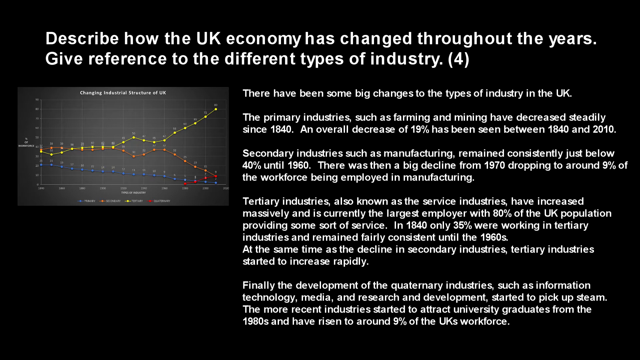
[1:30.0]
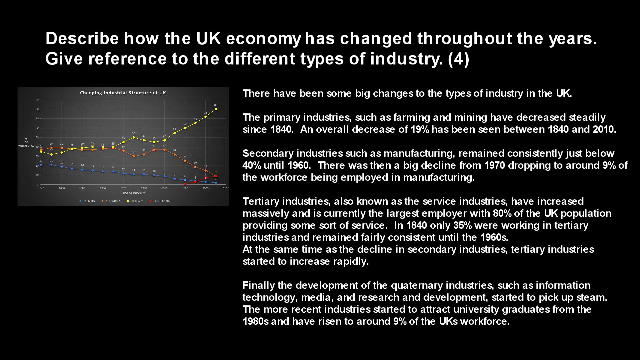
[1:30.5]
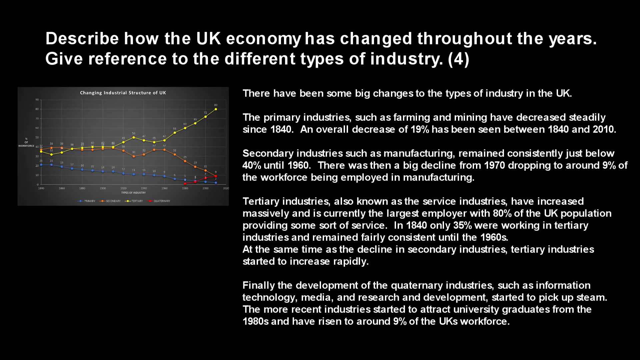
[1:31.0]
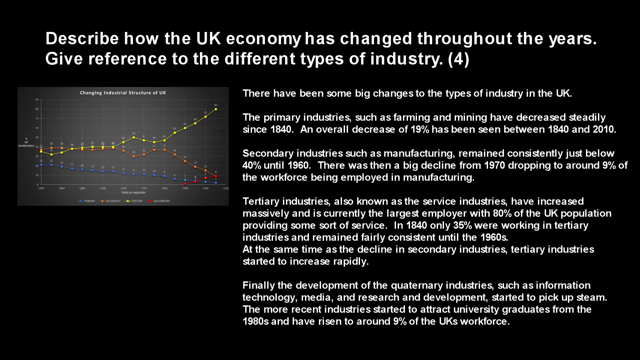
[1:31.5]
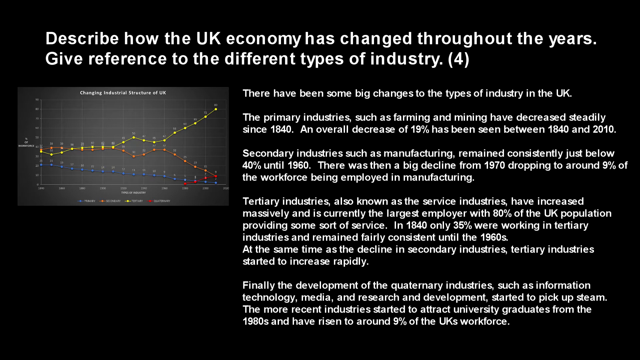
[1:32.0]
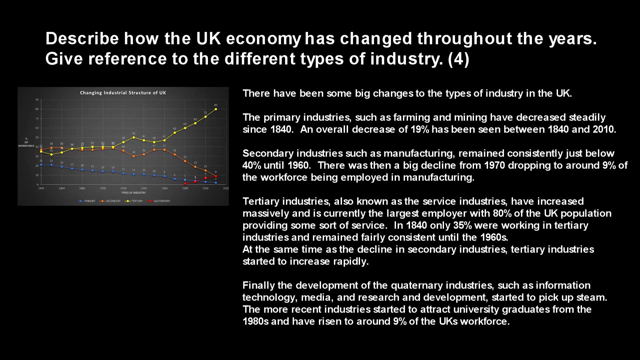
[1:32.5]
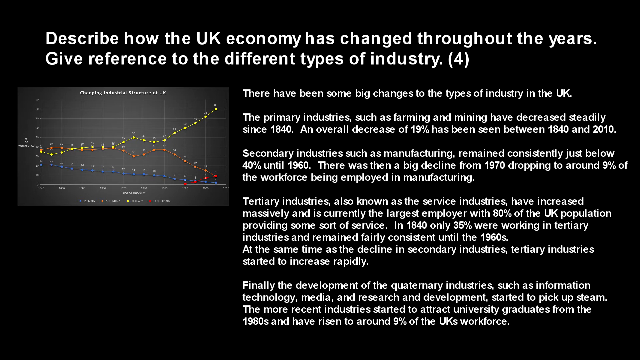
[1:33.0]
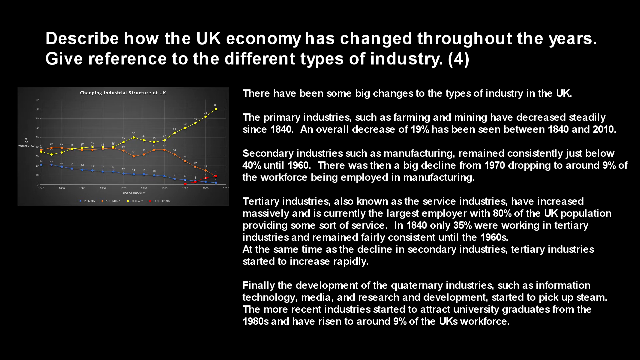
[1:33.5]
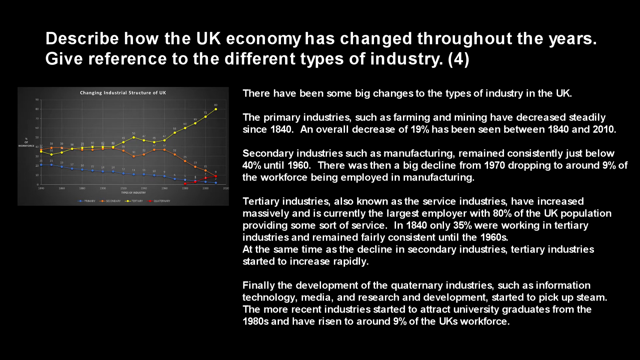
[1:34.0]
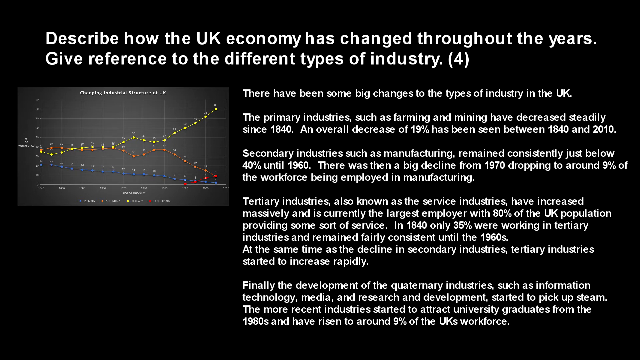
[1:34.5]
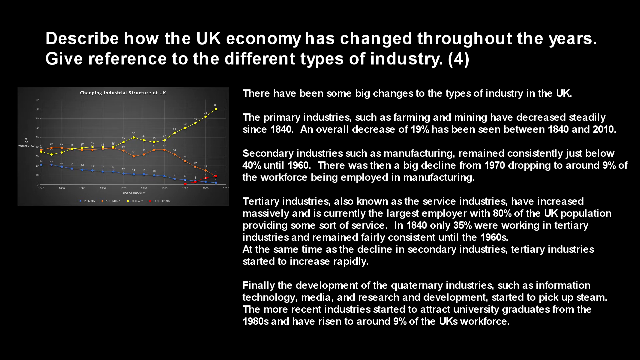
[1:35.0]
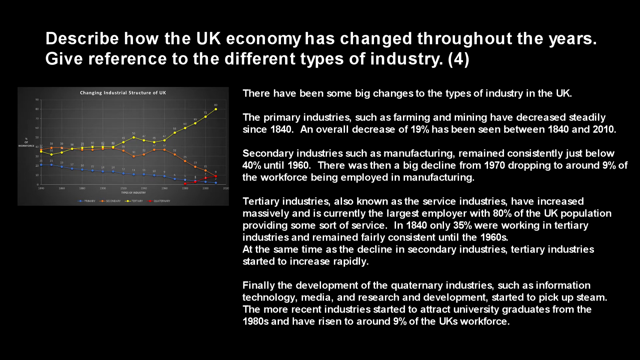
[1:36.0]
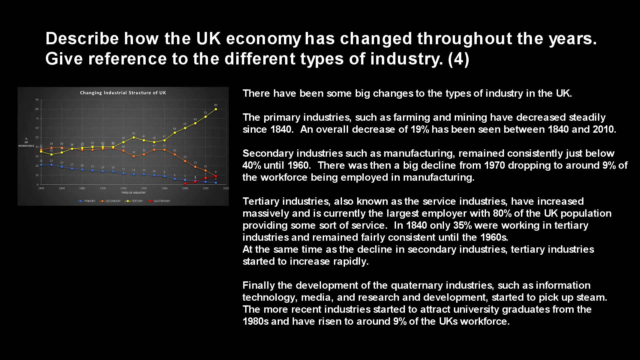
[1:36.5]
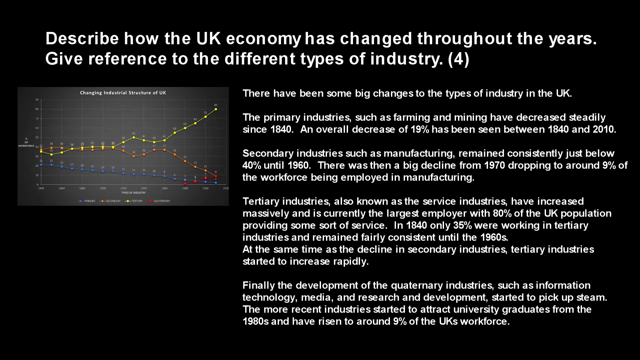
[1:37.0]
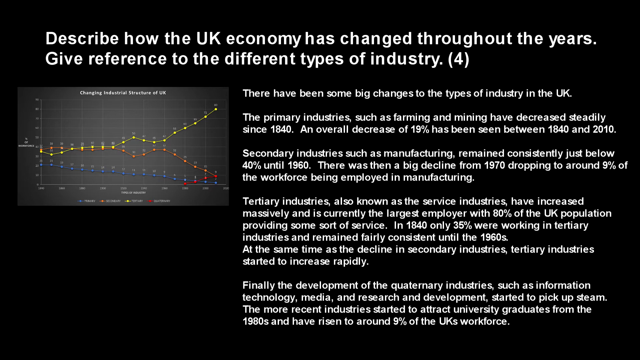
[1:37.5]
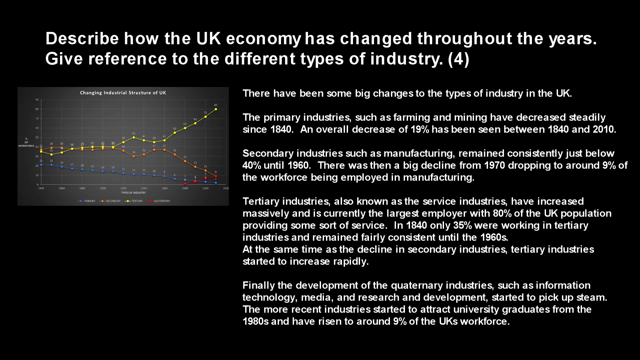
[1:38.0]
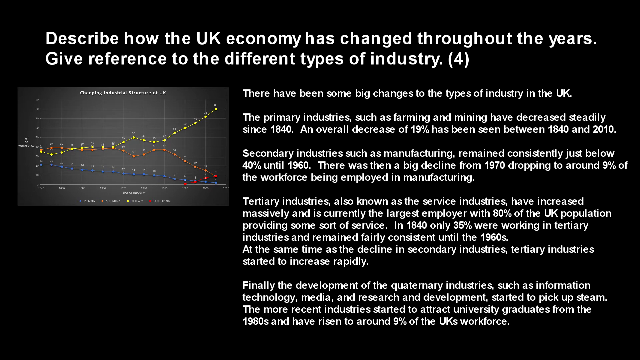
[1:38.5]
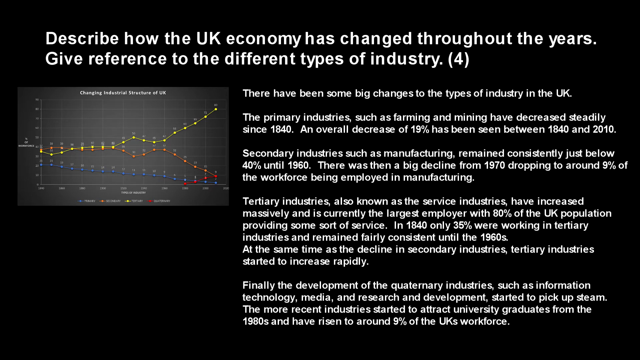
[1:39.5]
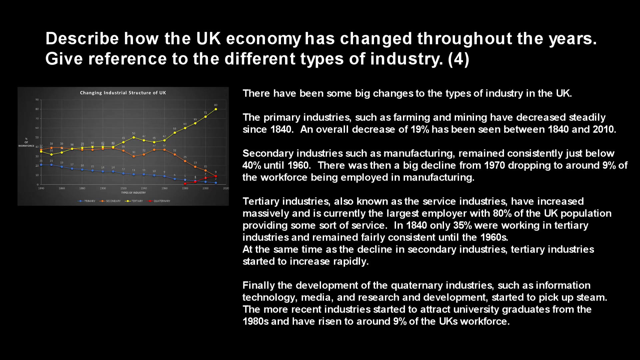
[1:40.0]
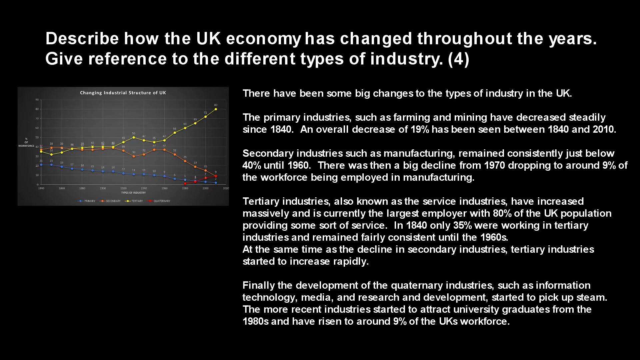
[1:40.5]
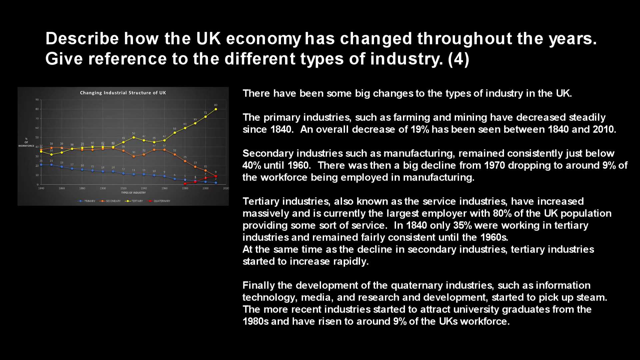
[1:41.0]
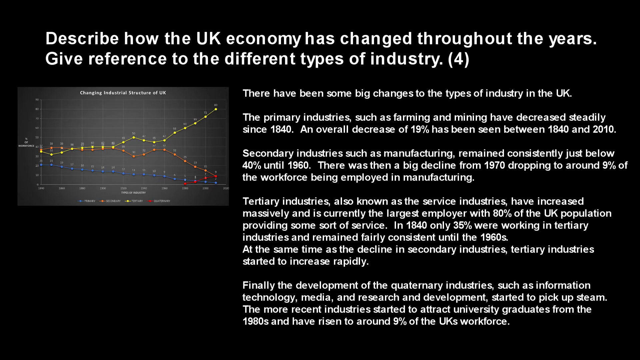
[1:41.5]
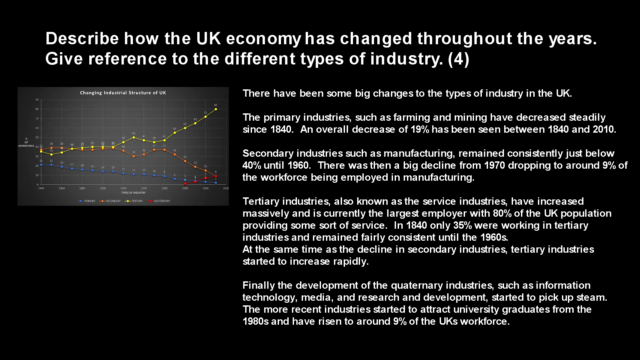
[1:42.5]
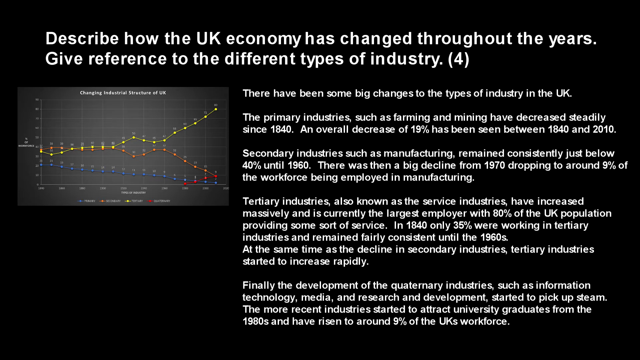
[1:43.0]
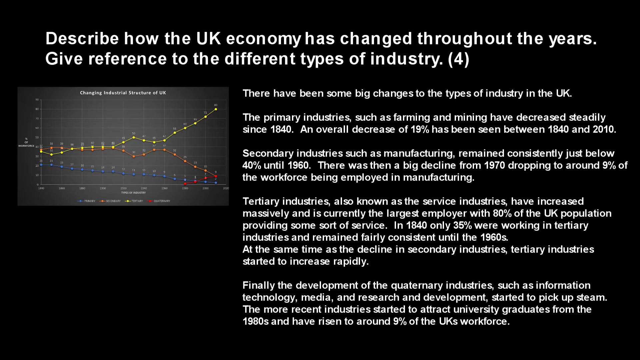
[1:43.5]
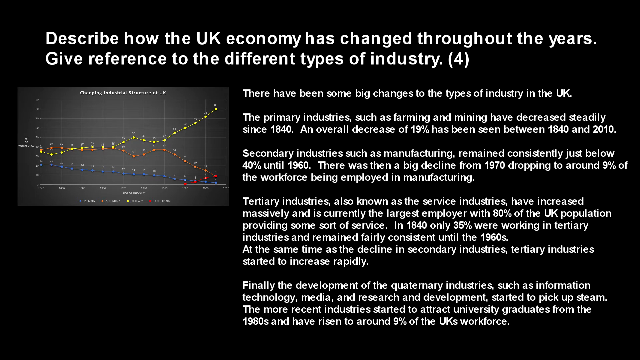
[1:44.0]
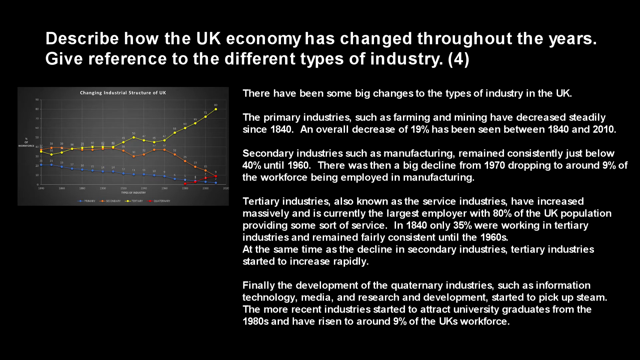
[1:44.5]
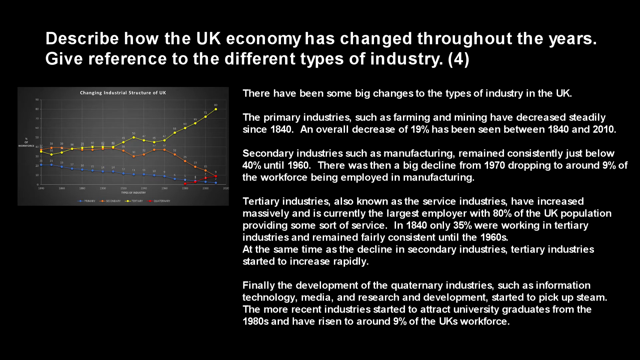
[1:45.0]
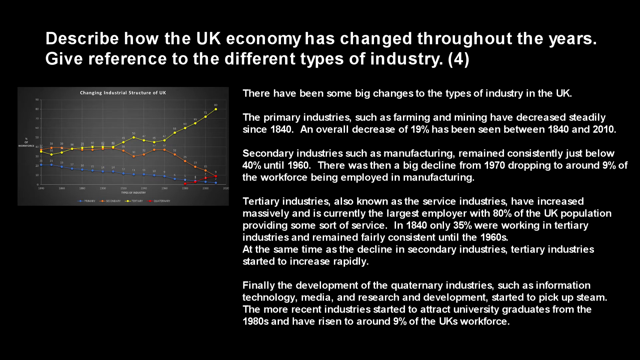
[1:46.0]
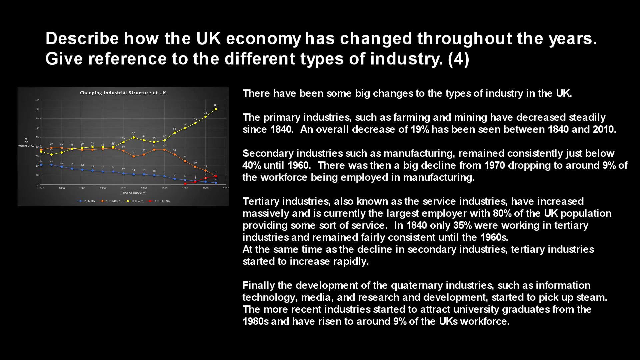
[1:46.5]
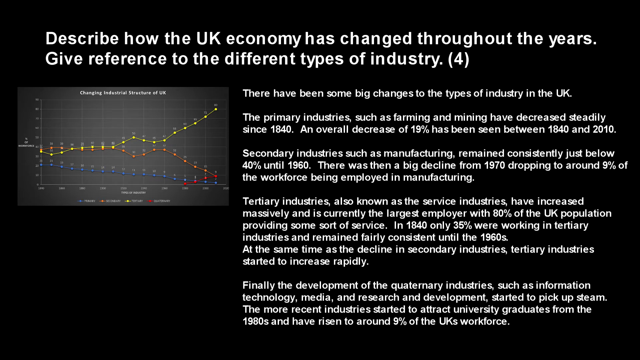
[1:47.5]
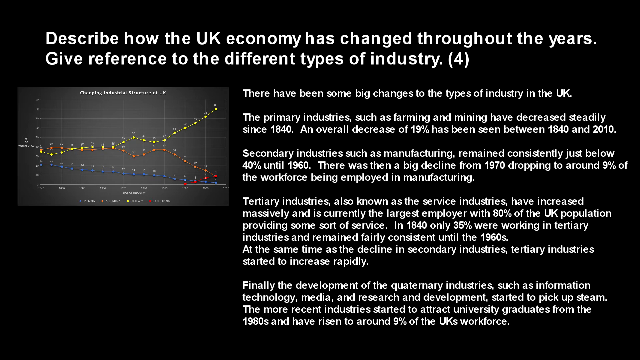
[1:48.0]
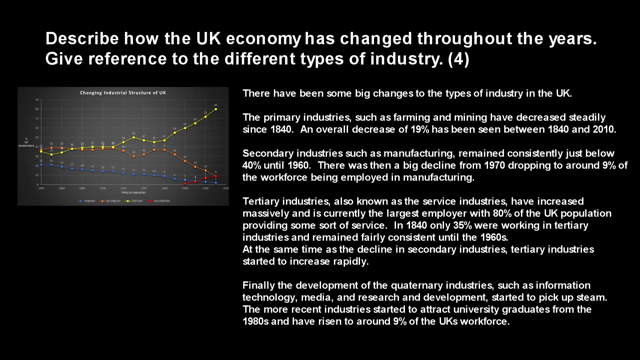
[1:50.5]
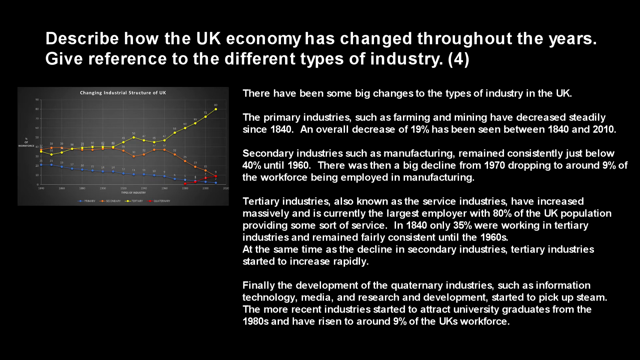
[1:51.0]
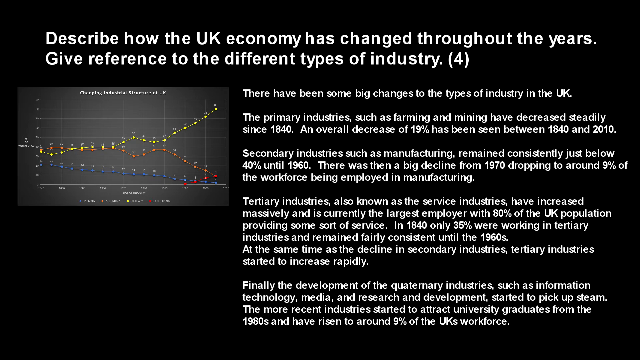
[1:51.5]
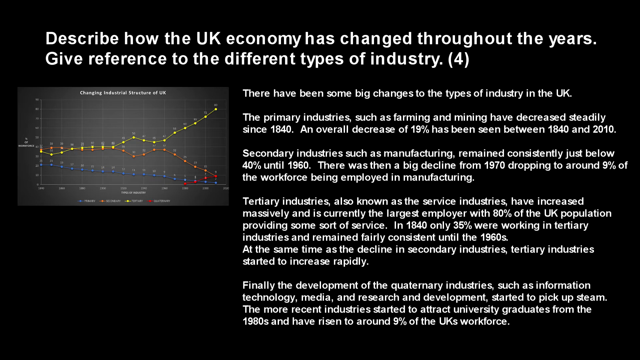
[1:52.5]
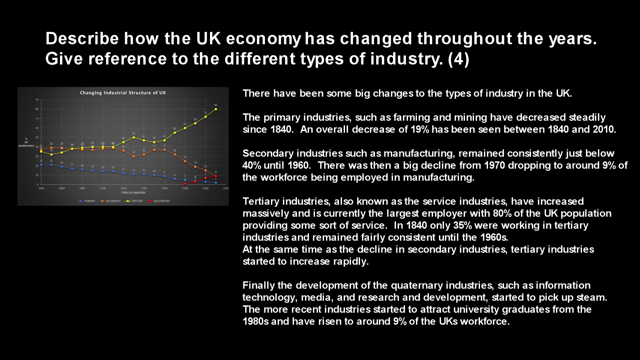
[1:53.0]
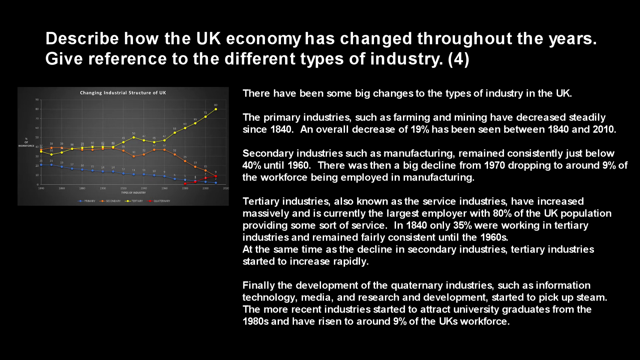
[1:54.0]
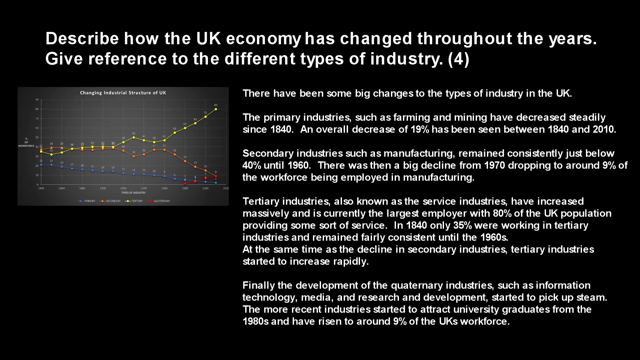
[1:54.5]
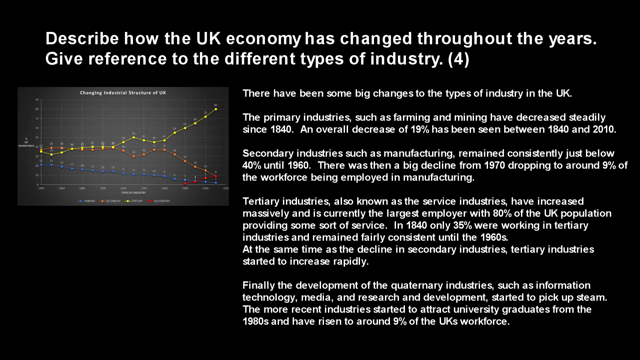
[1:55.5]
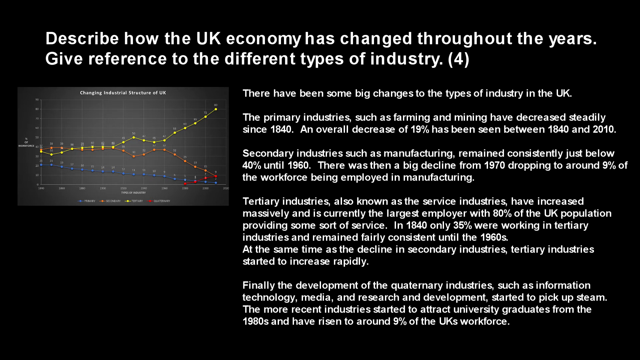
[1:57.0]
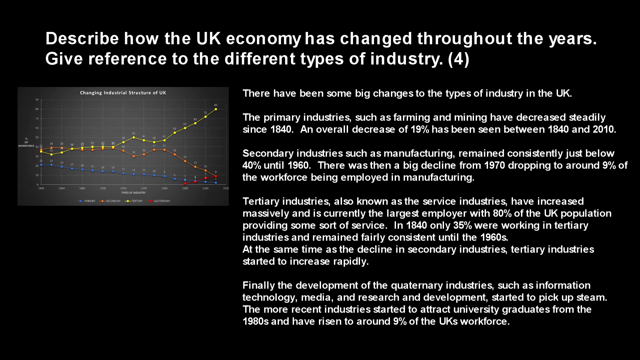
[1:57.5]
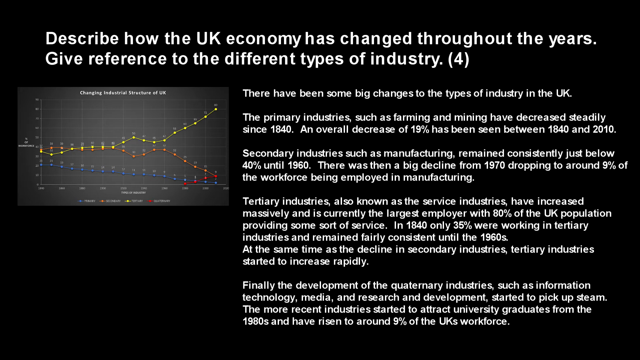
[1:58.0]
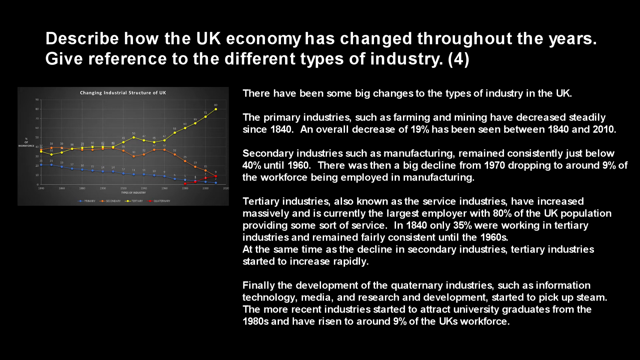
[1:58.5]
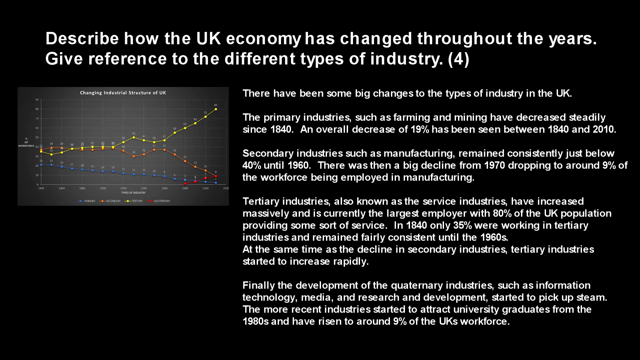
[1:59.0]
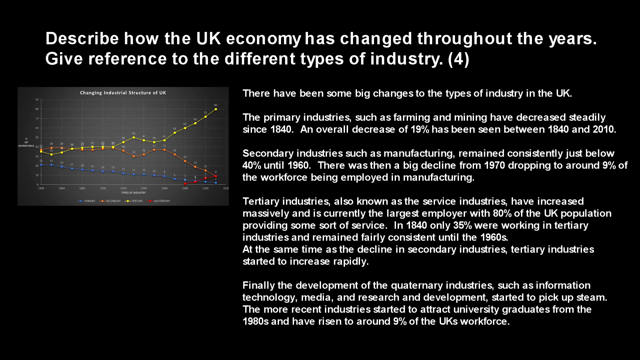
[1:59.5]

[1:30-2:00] Three industries are presented on the screen: one rises throughout the year, one drops throughout the year, and one does not increase during the year. The industry in yellow starts at an average level and rises throughout the year, while the one in blue does not rise and stays at an average spot.